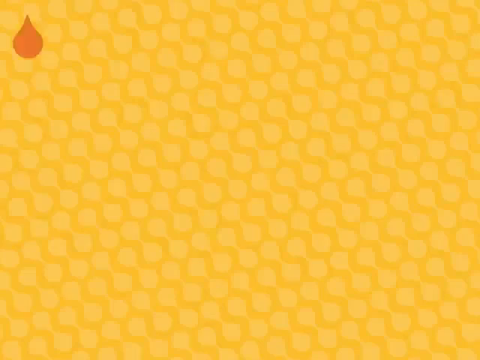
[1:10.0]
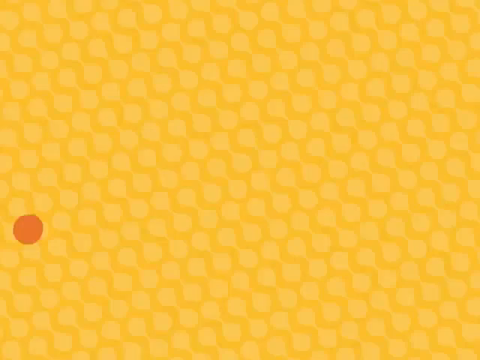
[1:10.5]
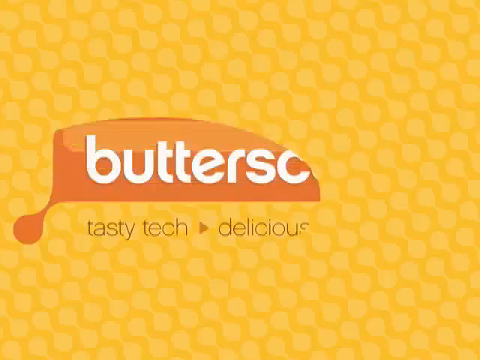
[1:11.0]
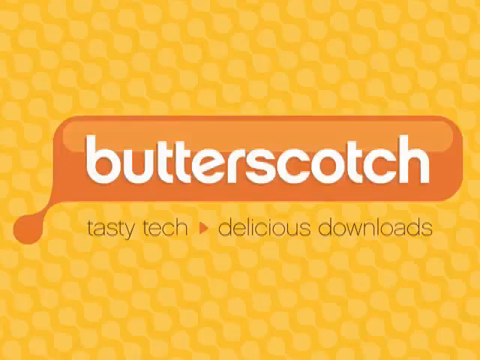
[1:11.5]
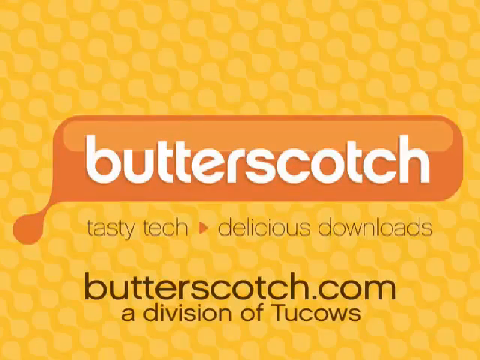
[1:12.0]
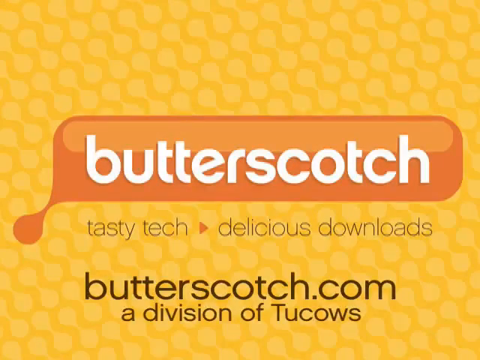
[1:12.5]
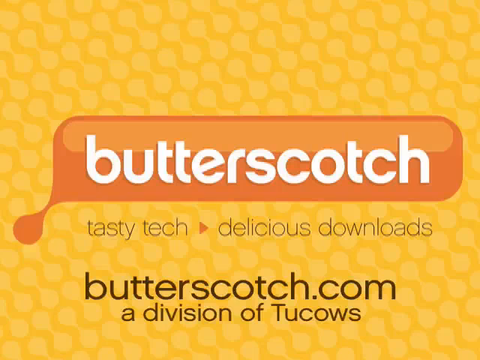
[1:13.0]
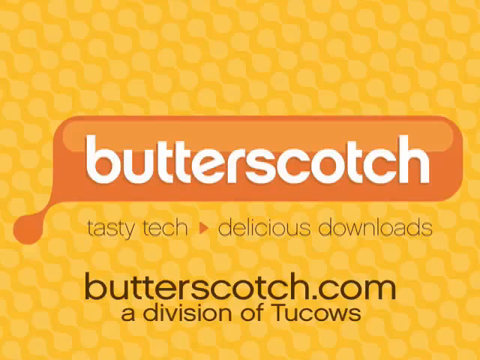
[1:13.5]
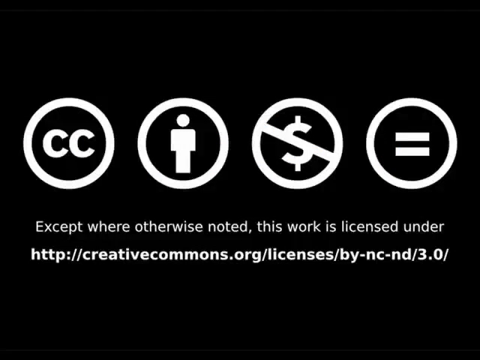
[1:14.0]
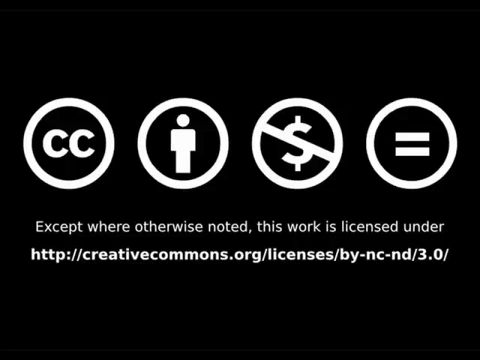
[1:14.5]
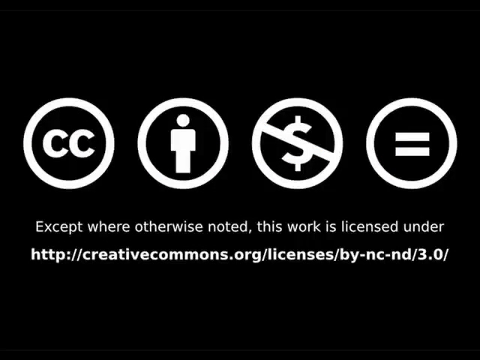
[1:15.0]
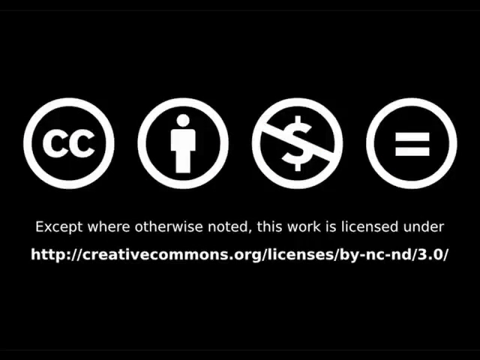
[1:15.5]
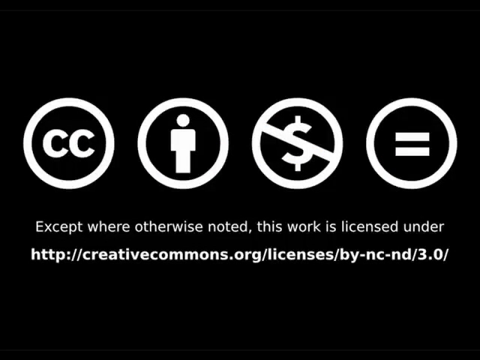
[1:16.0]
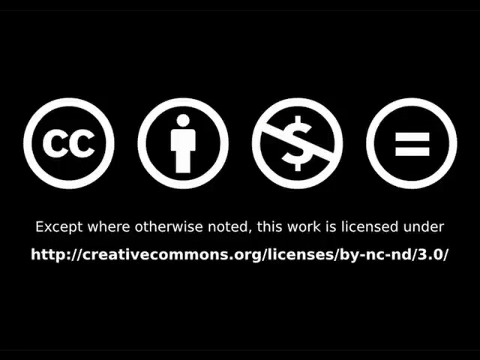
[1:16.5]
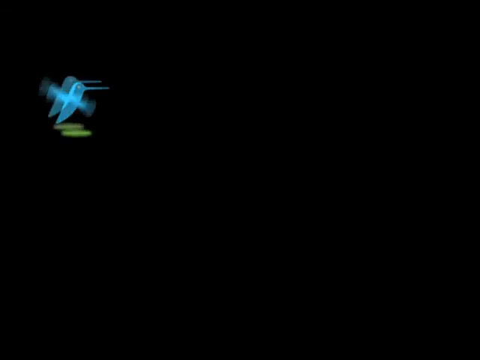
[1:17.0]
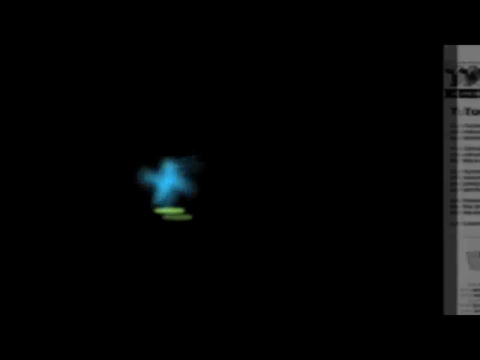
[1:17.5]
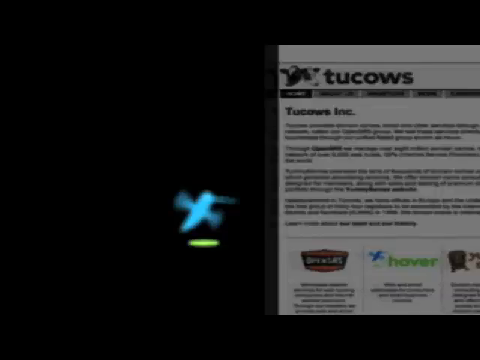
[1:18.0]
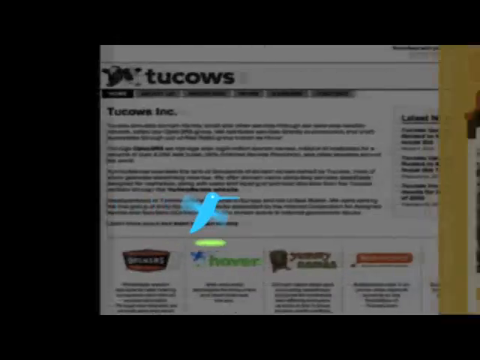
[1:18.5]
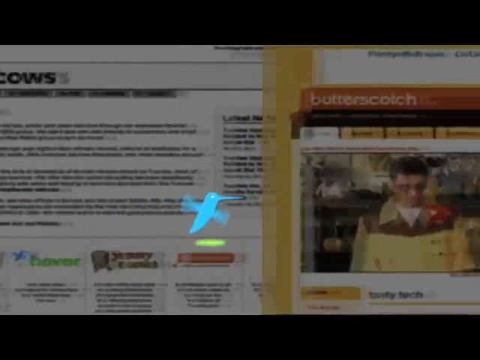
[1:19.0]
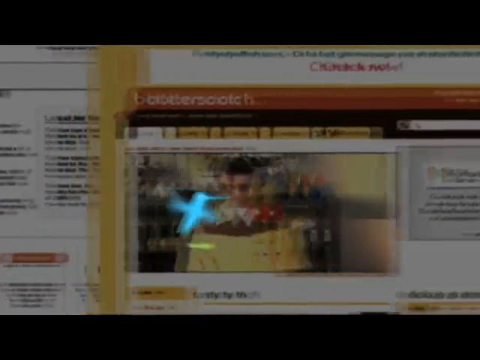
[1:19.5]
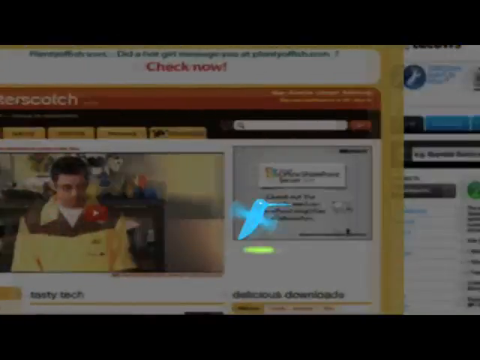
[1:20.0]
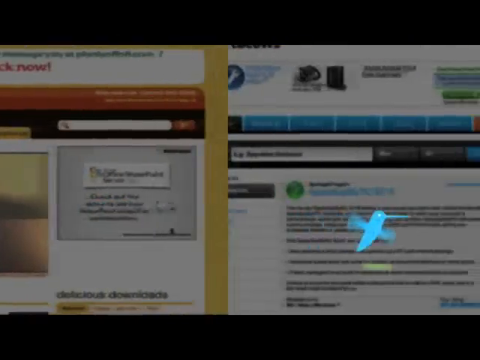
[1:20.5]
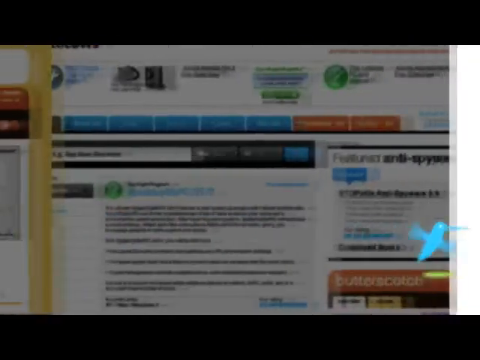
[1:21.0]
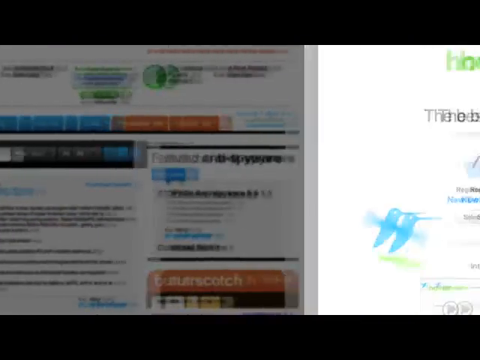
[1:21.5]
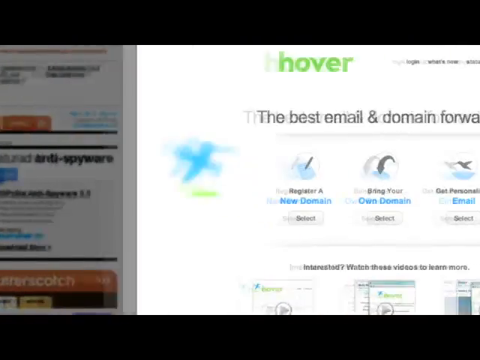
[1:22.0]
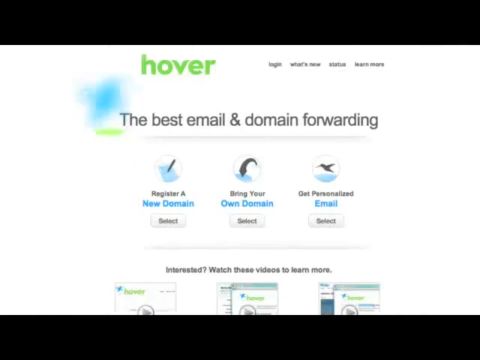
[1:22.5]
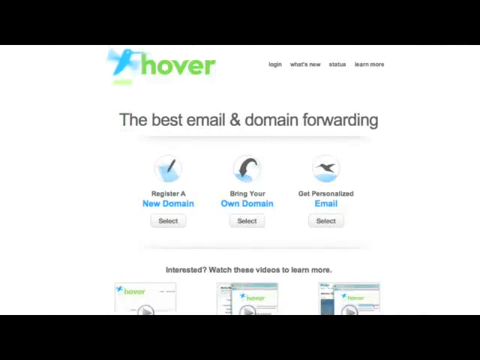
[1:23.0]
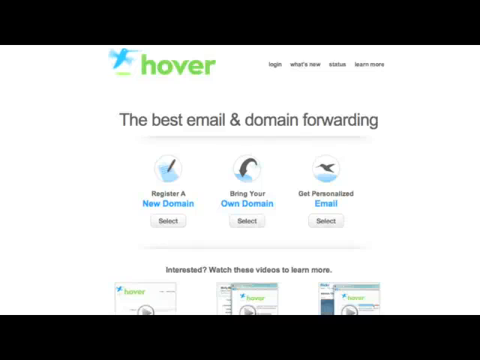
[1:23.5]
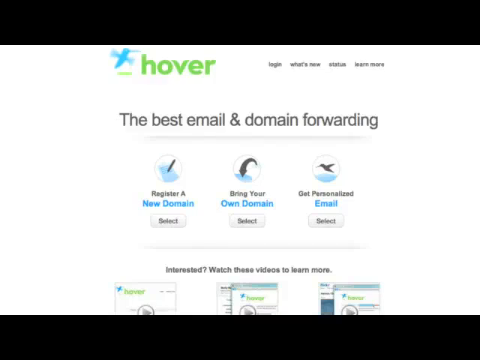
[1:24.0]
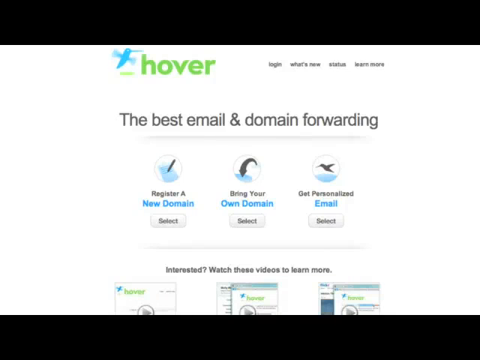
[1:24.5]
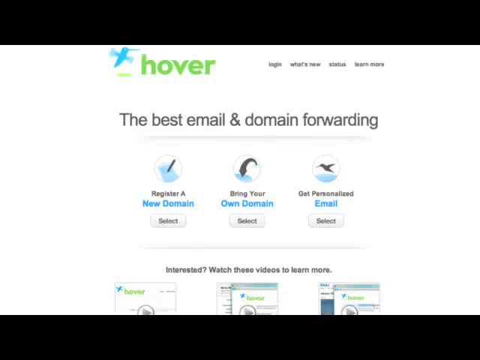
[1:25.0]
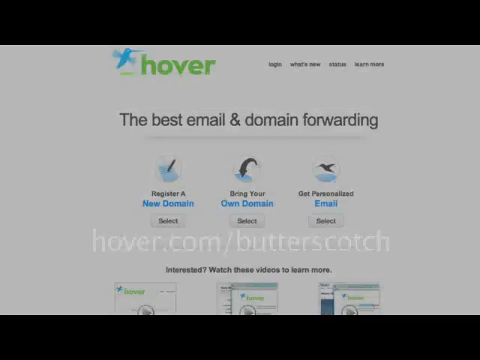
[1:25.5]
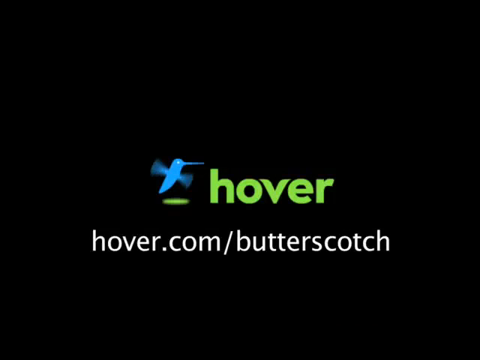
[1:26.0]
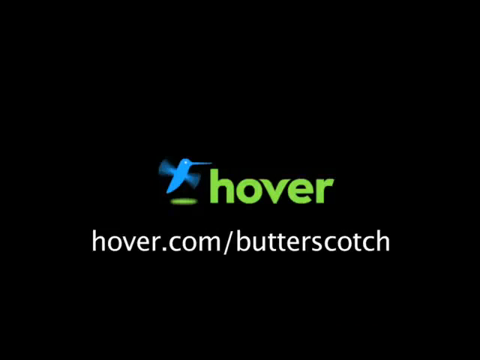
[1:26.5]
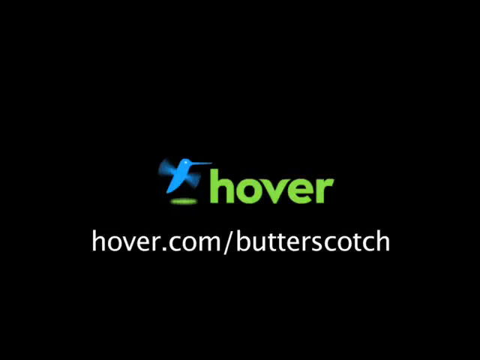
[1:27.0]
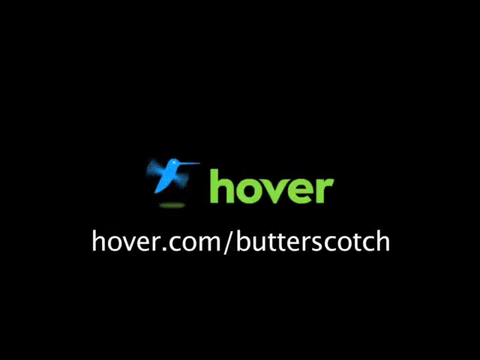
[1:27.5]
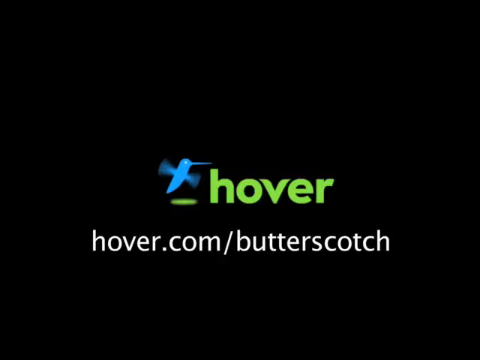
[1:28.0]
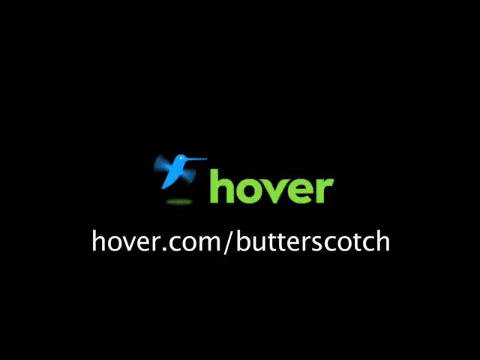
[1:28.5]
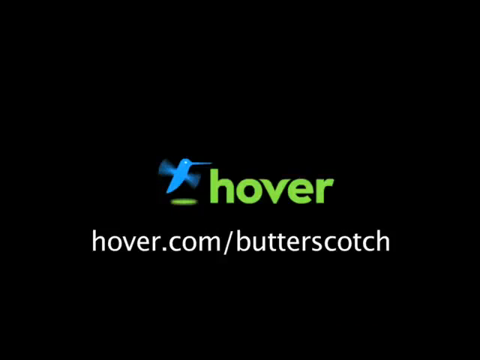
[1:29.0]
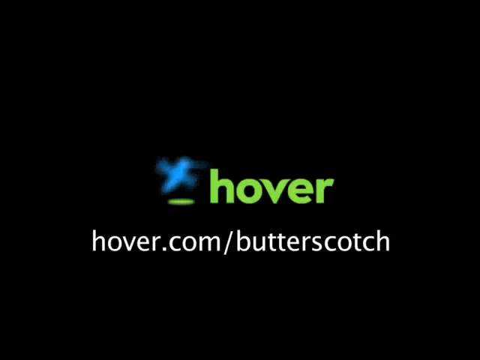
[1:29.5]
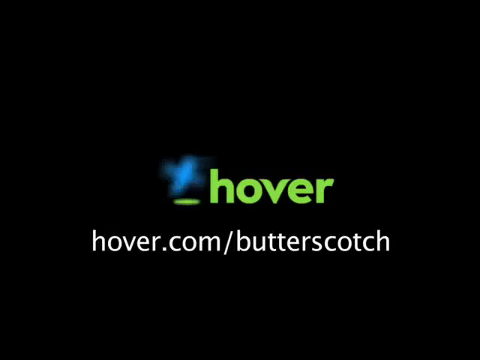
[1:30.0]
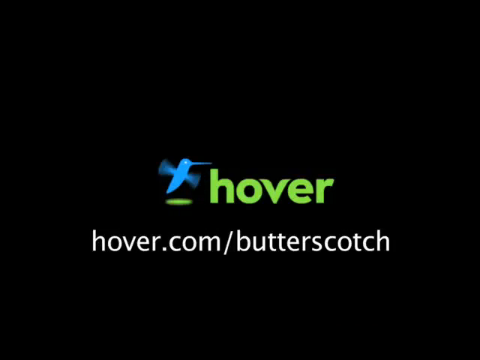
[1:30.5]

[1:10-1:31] The honeycomb screen is more or less empty. The caramel-colored droplet animation returns: it comes from the upper left of the screen, very close to the left side, drops down, stops about two-thirds of the way down, and turns into something like a sideways or angled teardrop, or maybe a flask or beaker shape. Bursting out of its open edge is the large landscape rectangle with curved corners and an all-caramel background, with "butterscotch" in lowercase in it. Beneath that, in gray font, are "tasty tech" and "delicious downloads", all lowercase. Beneath that, in slightly larger black font, is "butterscotch.com", and beneath that, "a division of Tucows"; the "T" in Tucows is the only capitalized letter on the page. Next comes a closing screen with a black background and white text. Across the middle are four white circles with images in them: the left one says CC, the next is a simplified icon of a human, the third has a dollar sign with a line through it, and the fourth has an equal sign. Text below reads "Except where otherwise noted, this work is licensed under", followed by an HTTP address referring to creativecommons.org with some other letters and numbers after it. Then what looks like a little blue hummingbird icon flies in from the upper left of the screen, past a bunch of what look like web pages, and stops on one with the word "hover" in green in the upper left, advertised as the "best email and domain forwarding". Then a black background appears with the hummingbird moving a little left and right to the left of the word "hover", and beneath it, in white font, "hover.com/butterscotch".